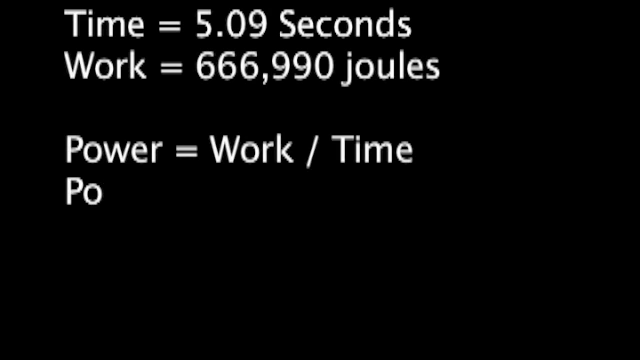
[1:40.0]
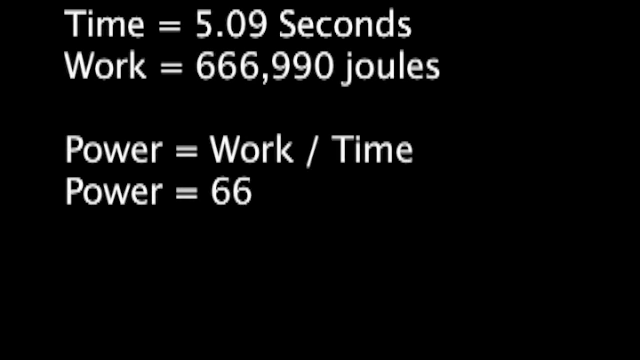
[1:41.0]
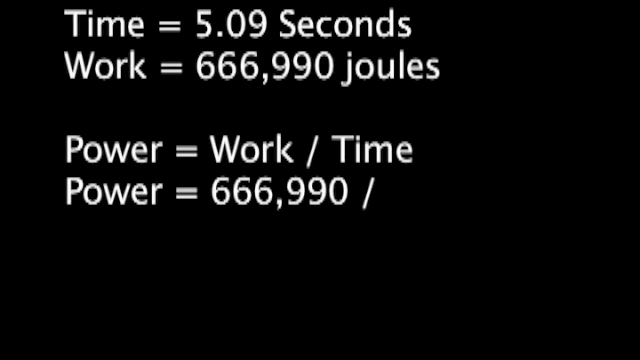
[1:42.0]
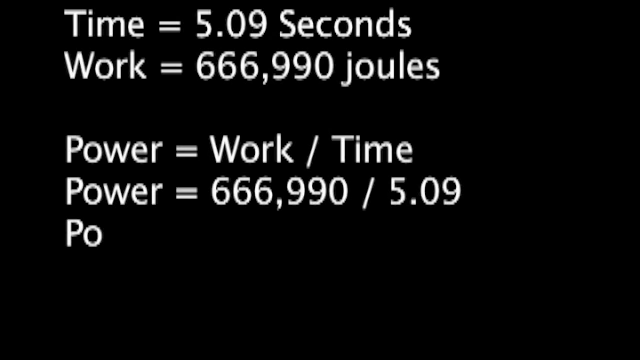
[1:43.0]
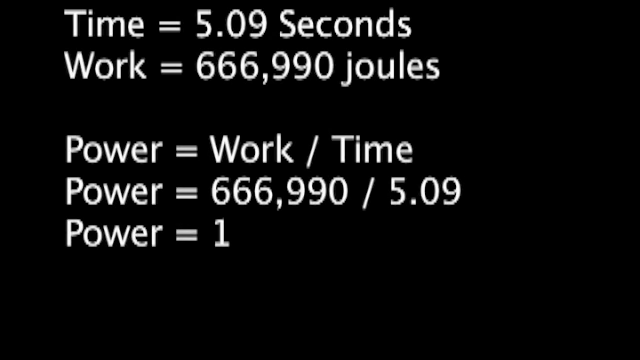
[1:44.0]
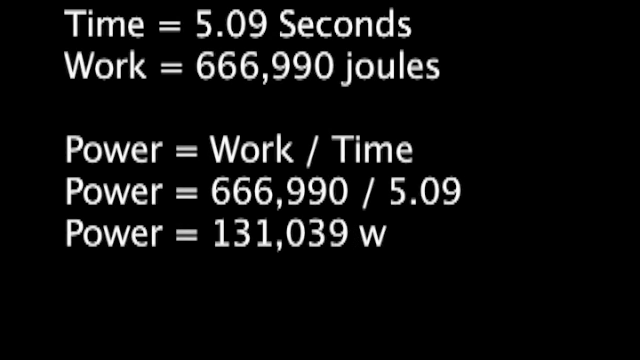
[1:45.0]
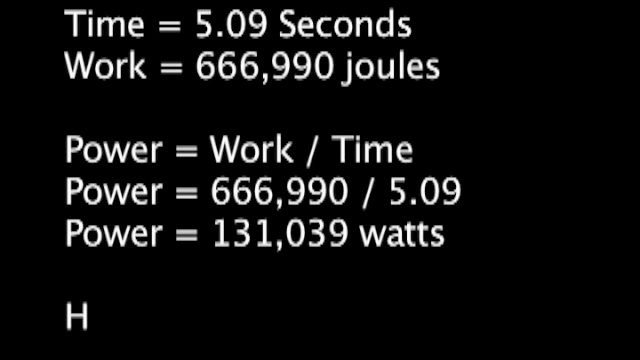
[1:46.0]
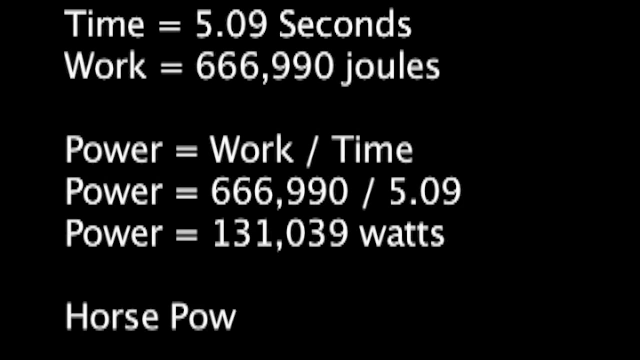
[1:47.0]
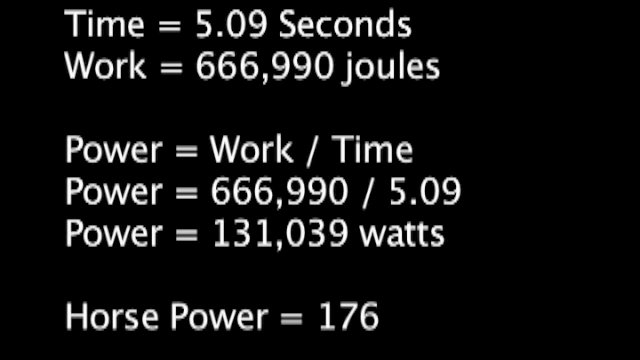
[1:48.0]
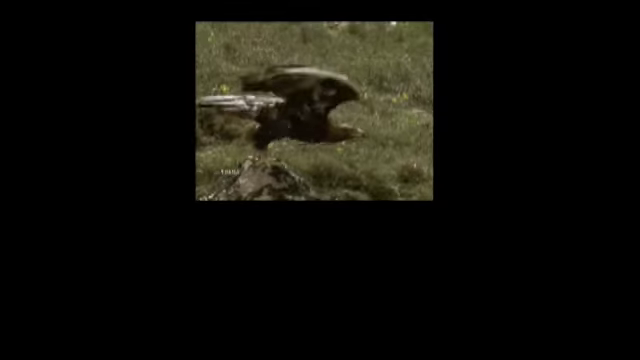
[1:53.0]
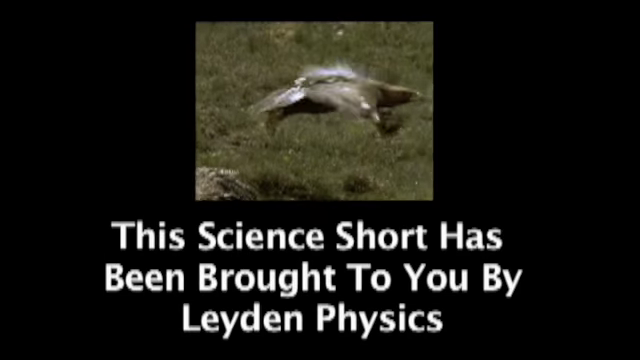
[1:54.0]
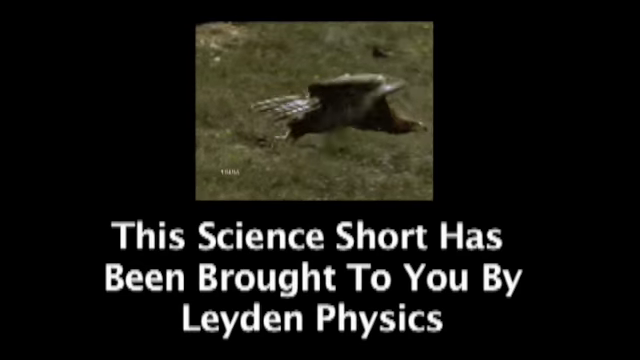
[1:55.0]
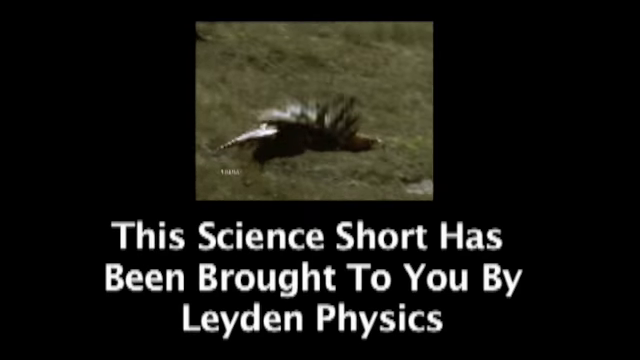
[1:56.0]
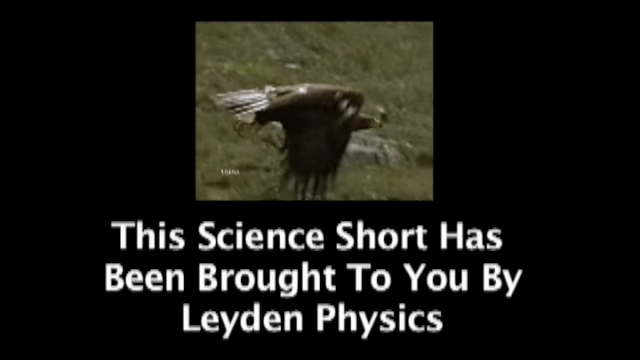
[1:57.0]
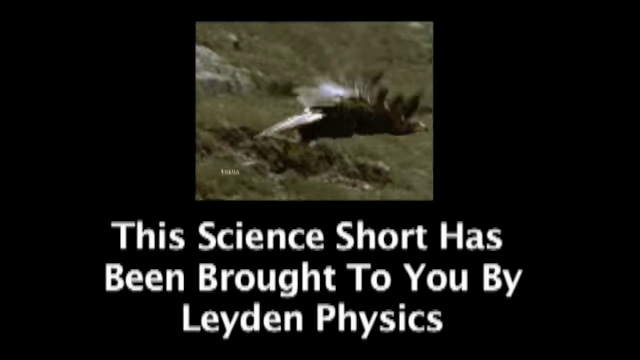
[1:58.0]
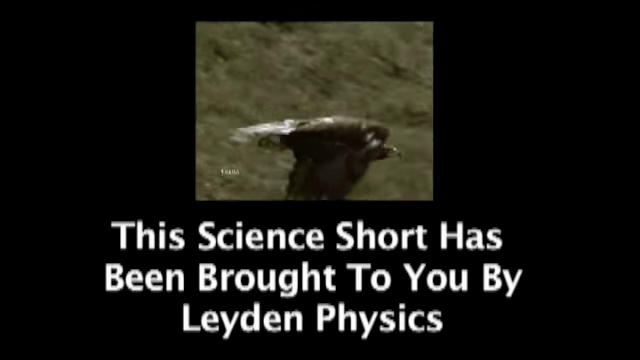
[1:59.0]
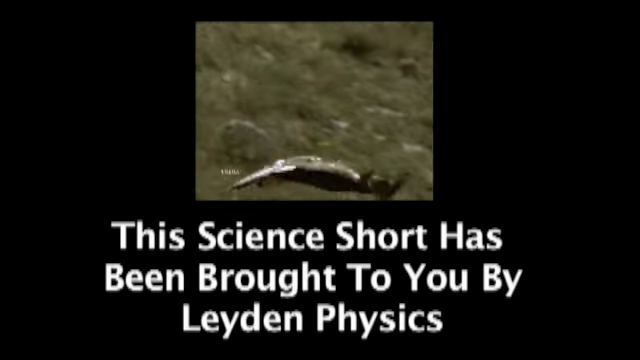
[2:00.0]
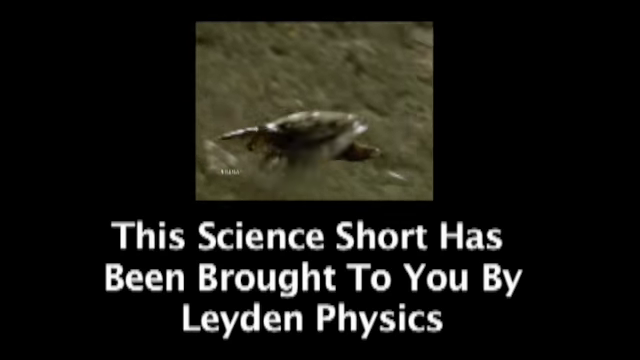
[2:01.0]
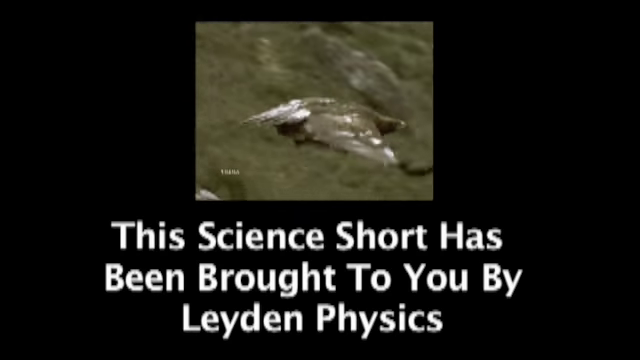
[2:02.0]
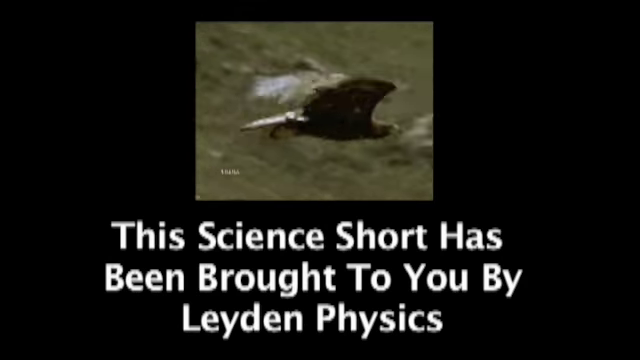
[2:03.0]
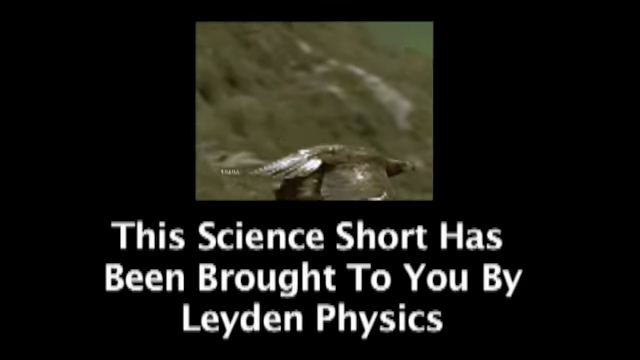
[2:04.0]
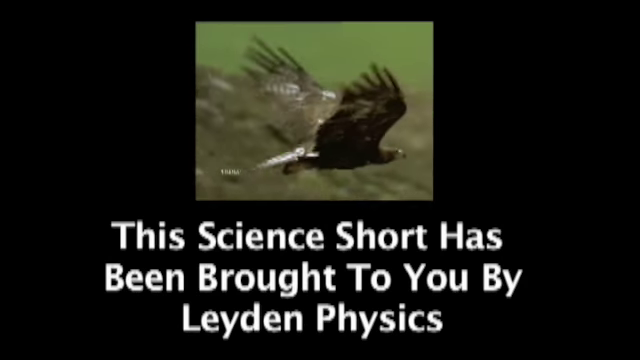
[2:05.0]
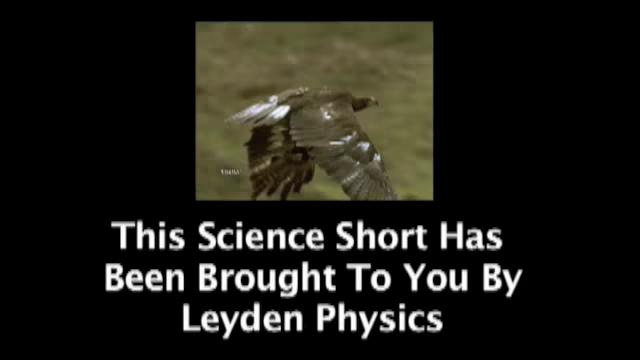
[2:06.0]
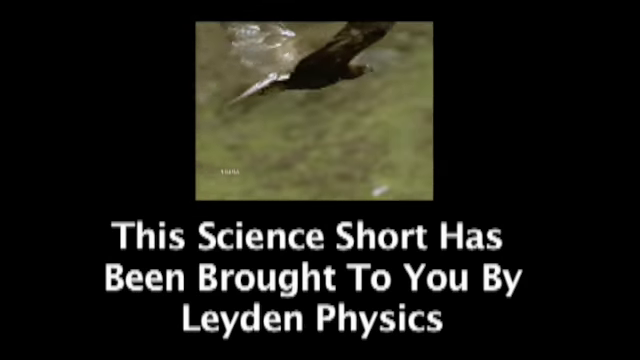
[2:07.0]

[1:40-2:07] On the black page, below "power = work/time," the typing continues with "power = 66990/5.09," then "power = 131039 watts," and below that "horsepower = 176 HP." The video then cuts to another black screen with a box in the center containing a video of what appears to be an eagle. The eagle is trying to take off in flight and stays fairly low to the ground, flying for several moments. Below the eagle, text reads "This science short has been brought to you by Leiden Physics." The eagle keeps trying to take off, getting slightly higher, and after several moments the video comes to a halt and ends.